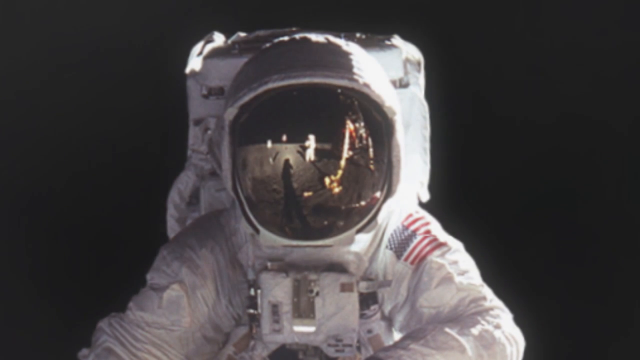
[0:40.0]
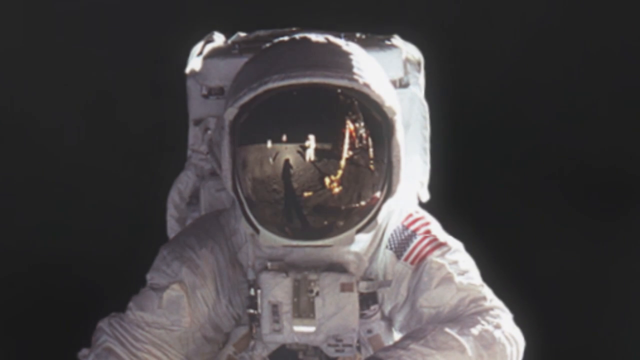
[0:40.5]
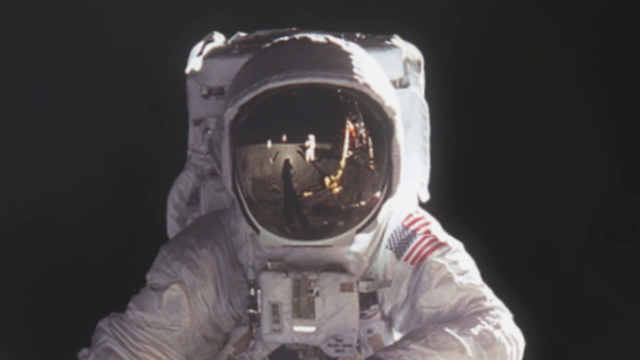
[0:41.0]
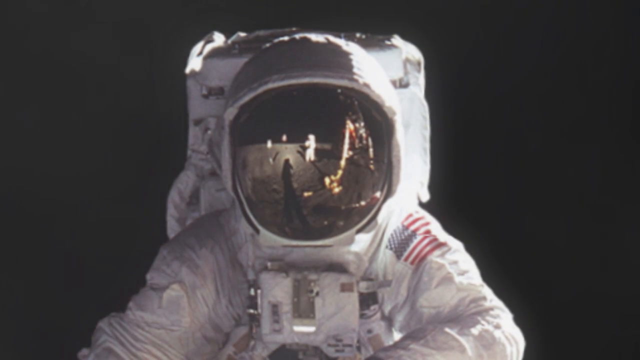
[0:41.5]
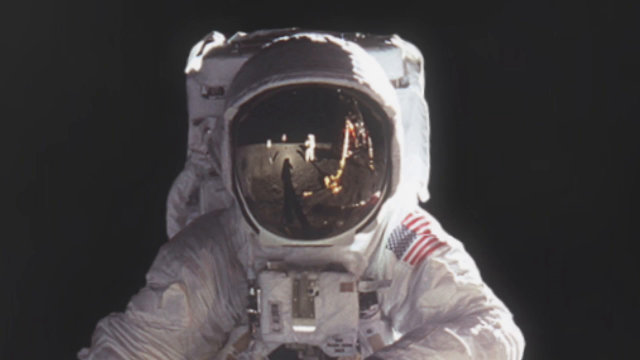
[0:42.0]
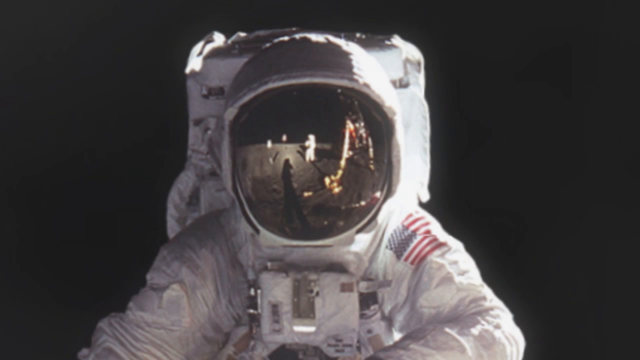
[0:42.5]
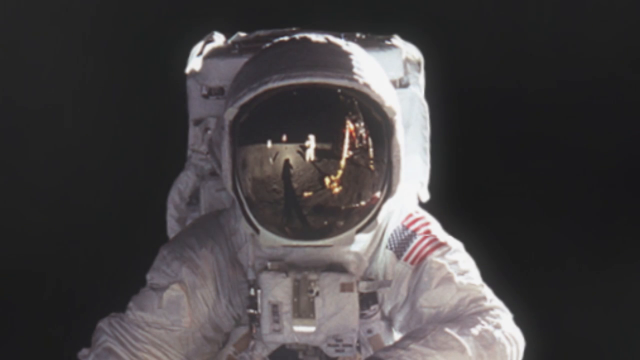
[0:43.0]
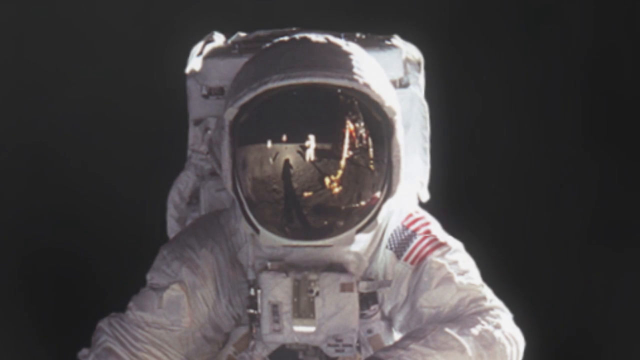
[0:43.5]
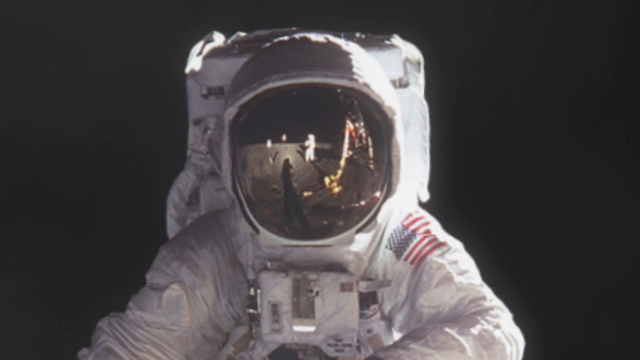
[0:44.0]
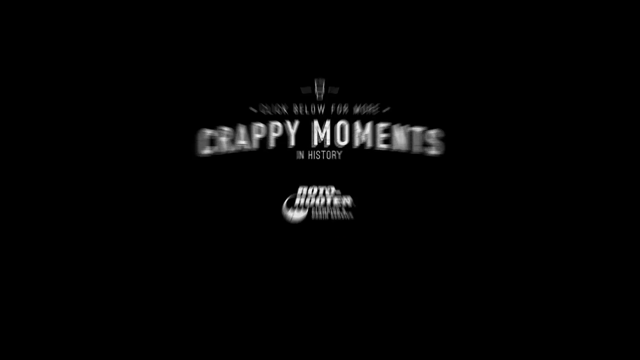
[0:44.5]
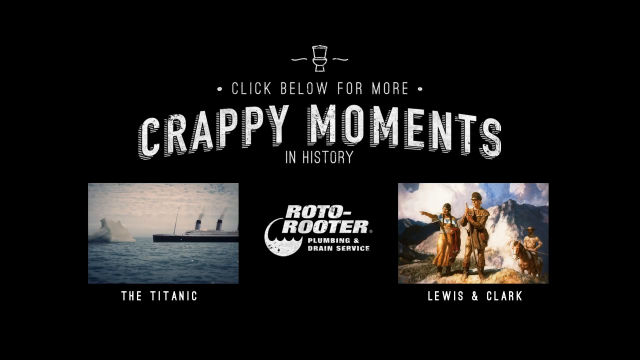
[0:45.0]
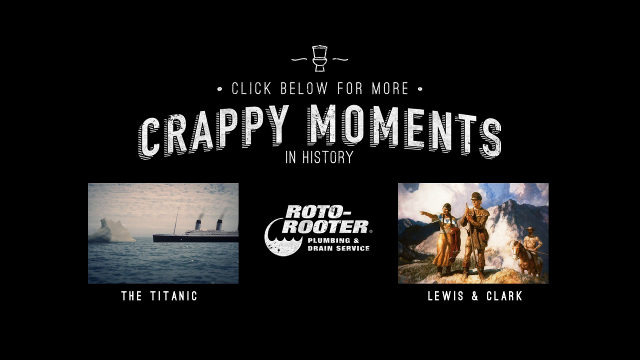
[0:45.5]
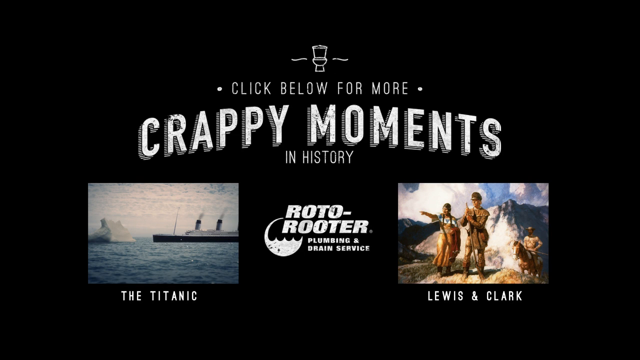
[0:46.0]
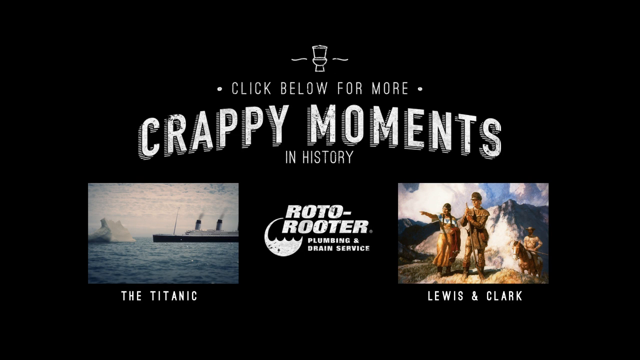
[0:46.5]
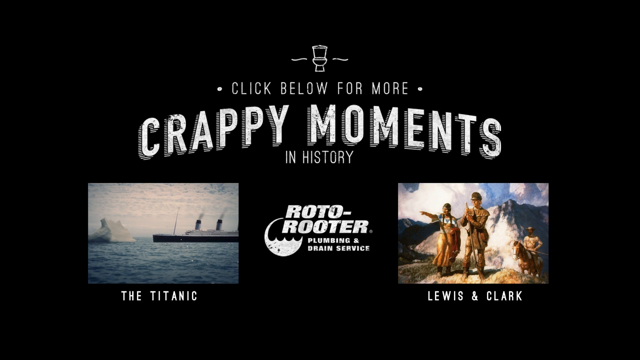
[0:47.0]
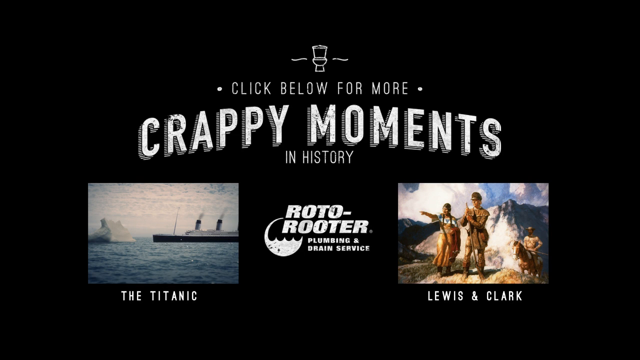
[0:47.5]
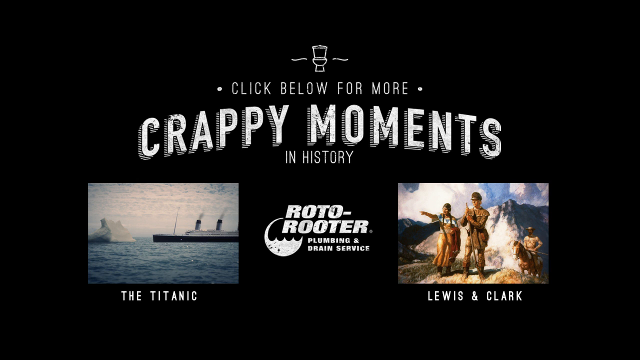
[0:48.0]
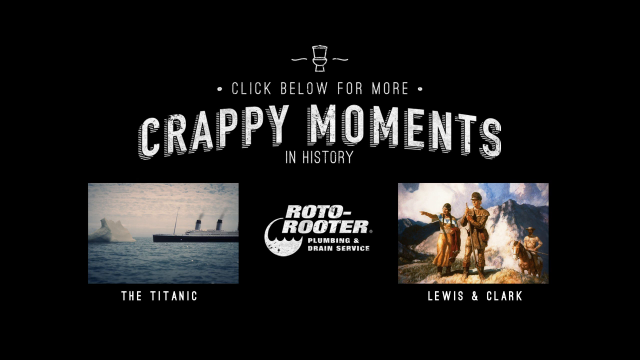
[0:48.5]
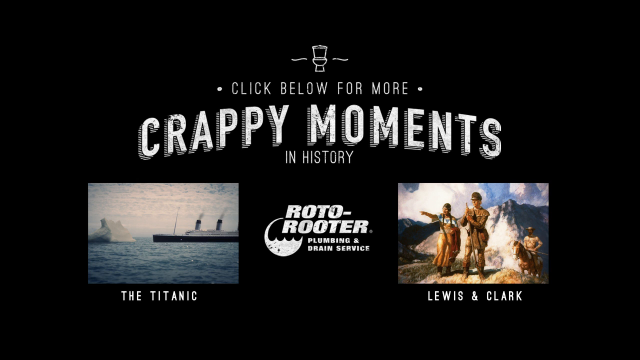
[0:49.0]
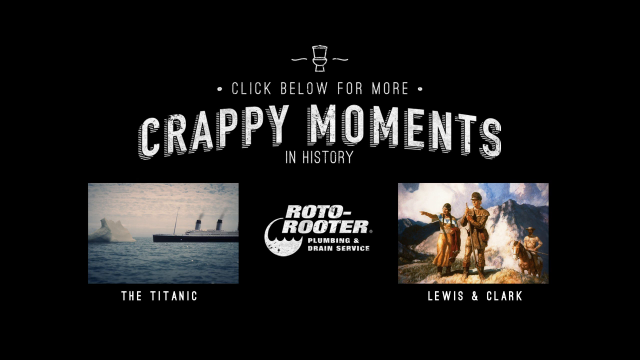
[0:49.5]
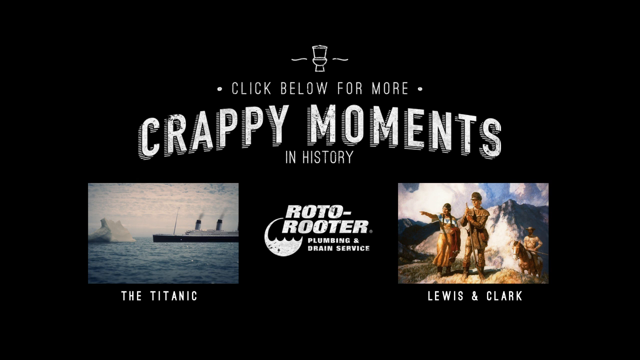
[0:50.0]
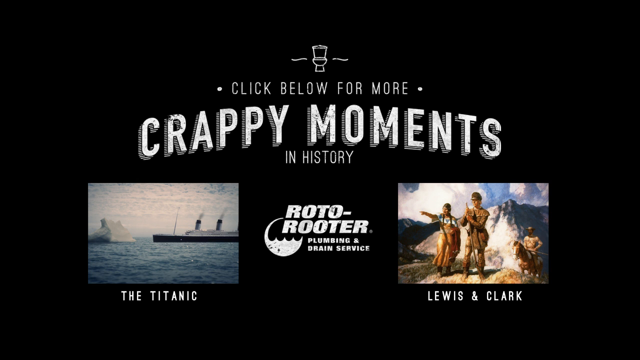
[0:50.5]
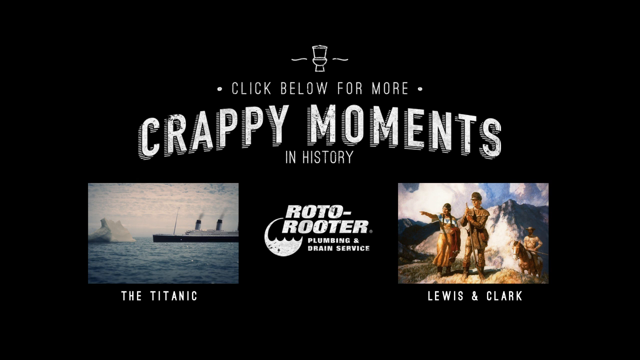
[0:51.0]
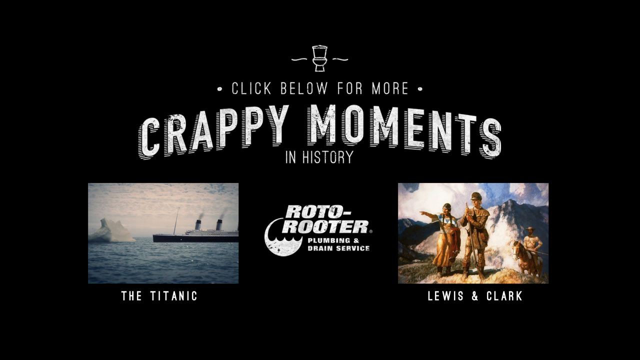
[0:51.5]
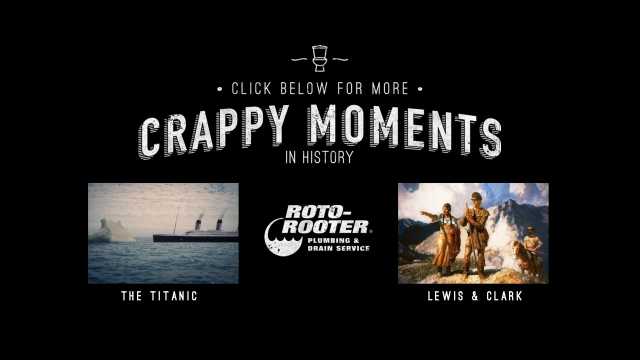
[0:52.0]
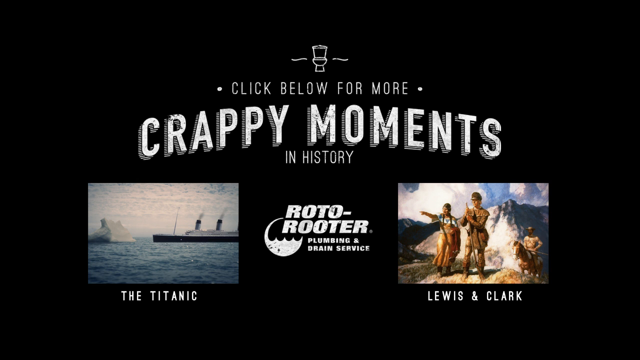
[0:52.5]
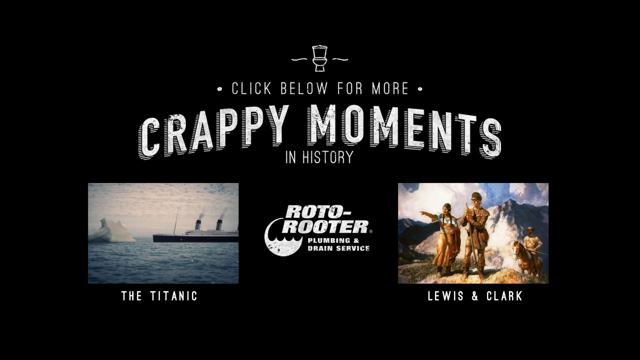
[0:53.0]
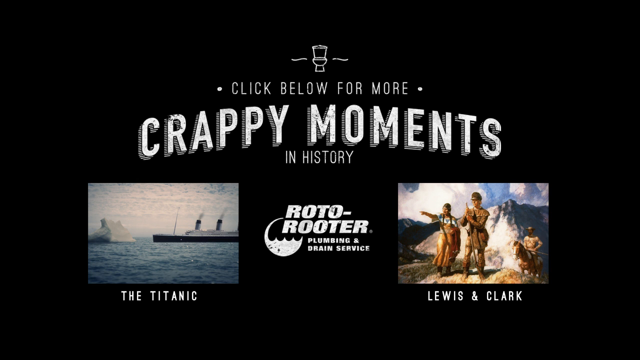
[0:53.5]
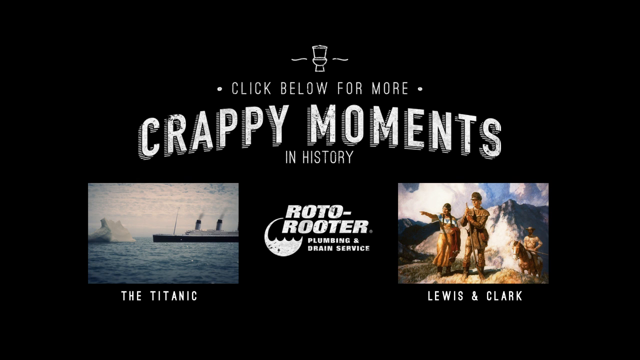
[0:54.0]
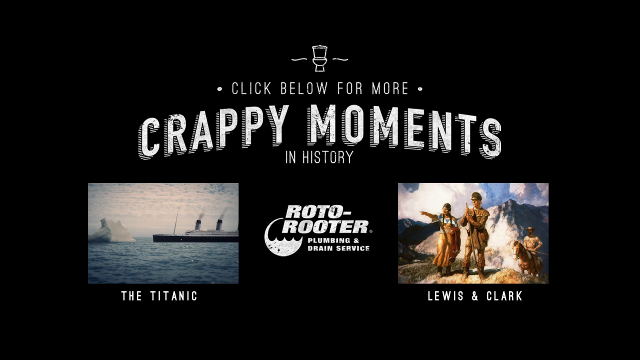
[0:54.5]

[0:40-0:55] An image shows an astronaut, with a reflection in the visor showing the lander and another astronaut. On his left shoulder there appears to be an American flag. The shot lingers on this astronaut as some sort of haze shows. It then transitions as text moves in from the center and pushes forward towards the viewer, while an image comes in from the left and another from the right. The left image is of the Titanic and the right image is of Lewis and Clark. At the center is "roto-rooter plumbing and drain service." The image is for more crappy moments in history.